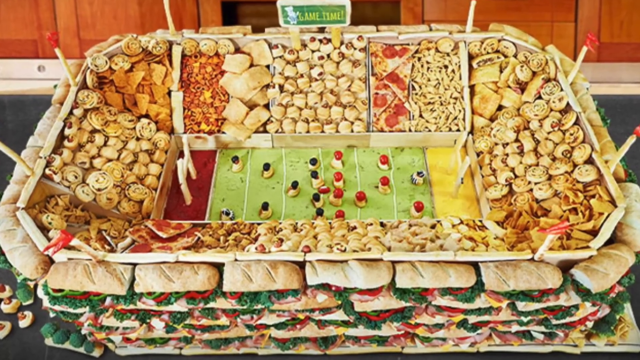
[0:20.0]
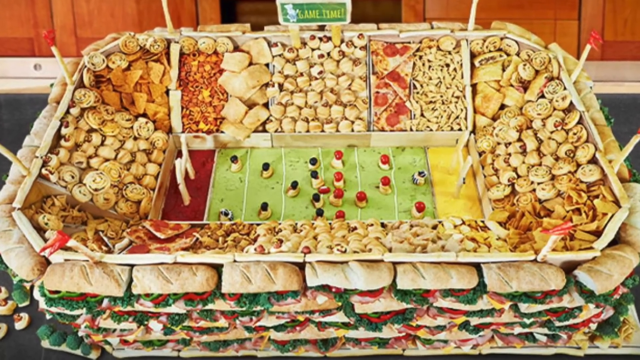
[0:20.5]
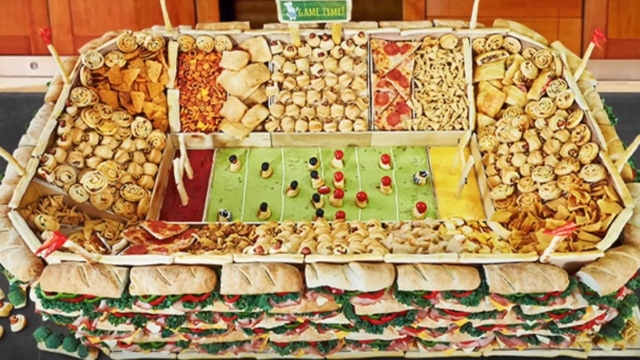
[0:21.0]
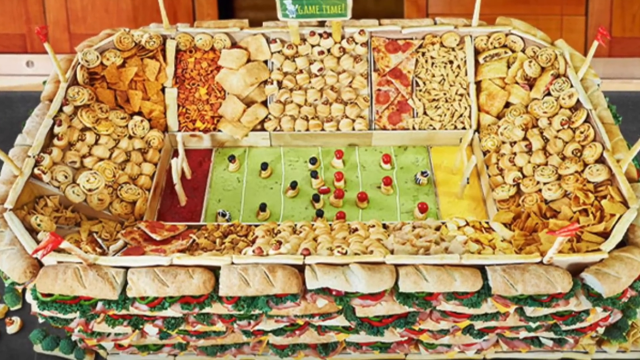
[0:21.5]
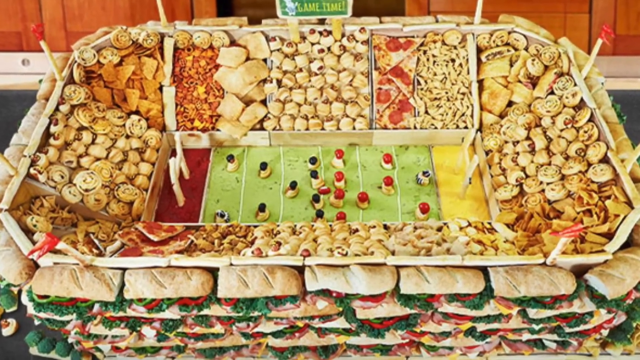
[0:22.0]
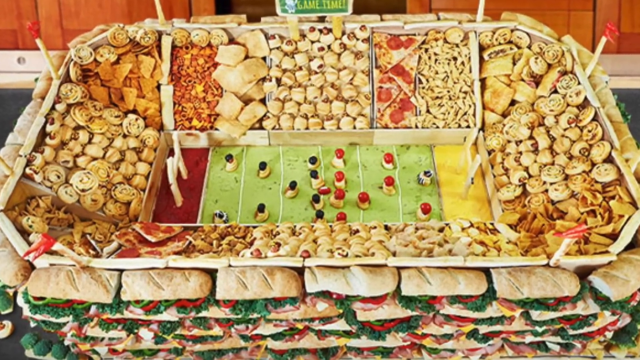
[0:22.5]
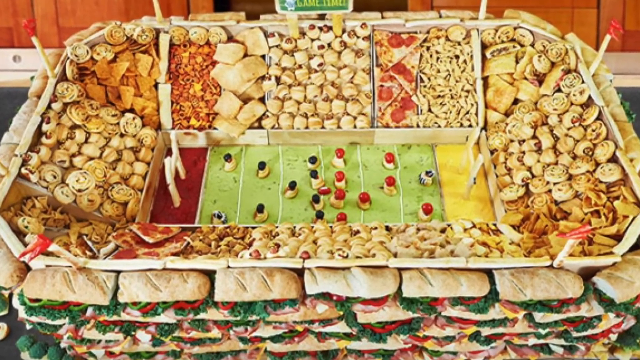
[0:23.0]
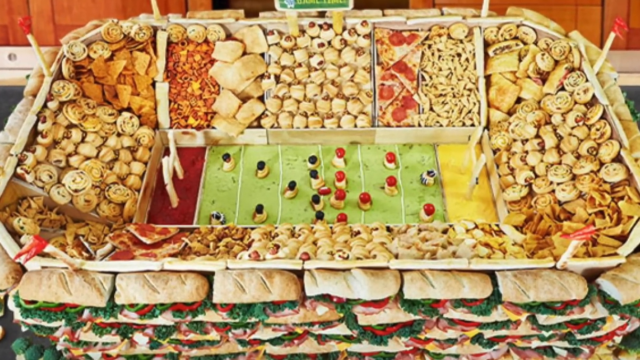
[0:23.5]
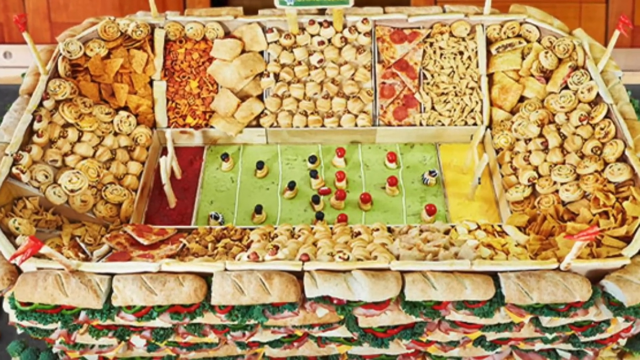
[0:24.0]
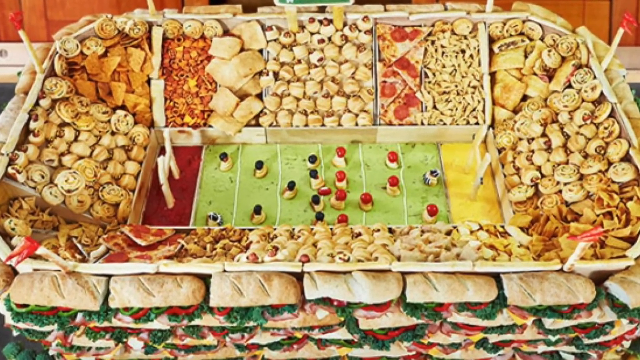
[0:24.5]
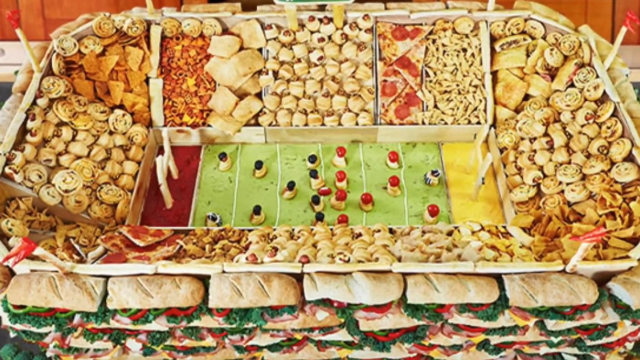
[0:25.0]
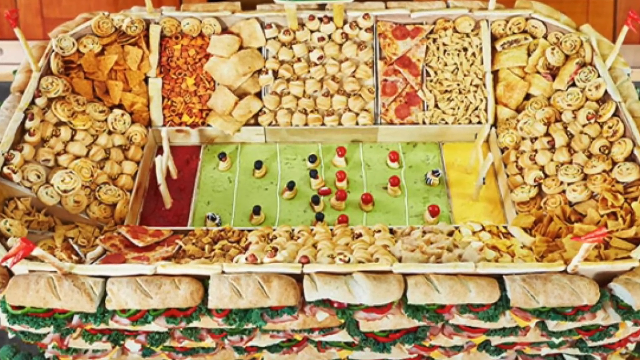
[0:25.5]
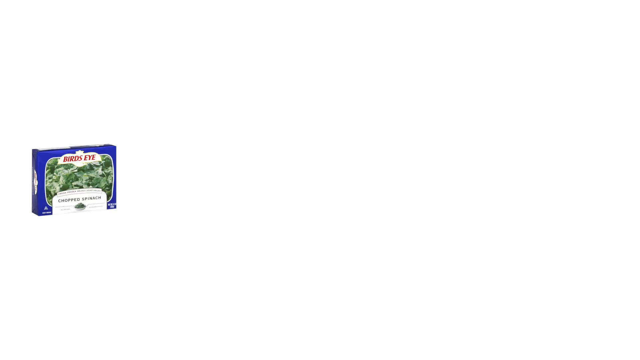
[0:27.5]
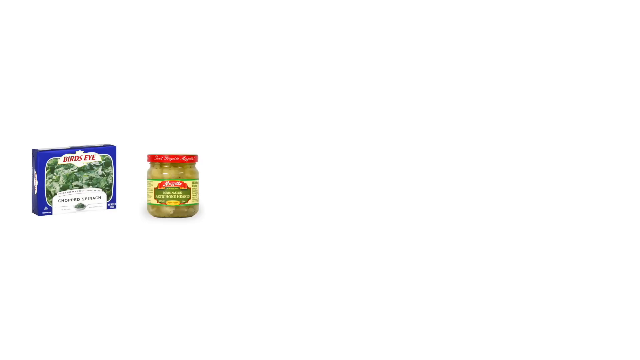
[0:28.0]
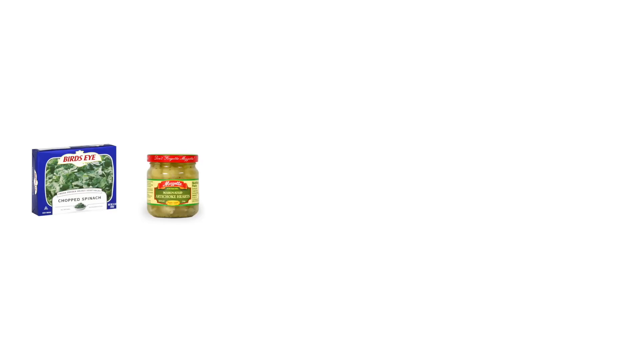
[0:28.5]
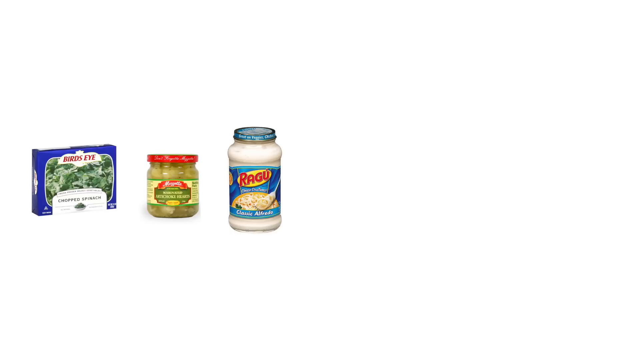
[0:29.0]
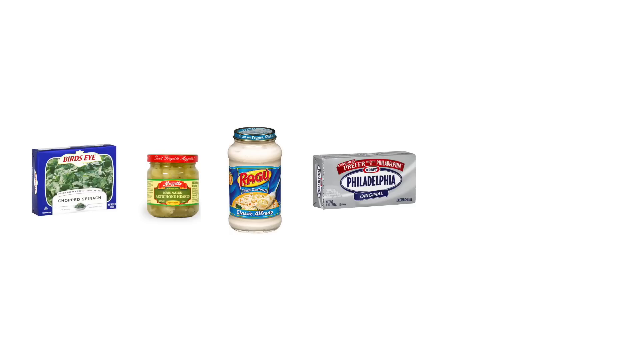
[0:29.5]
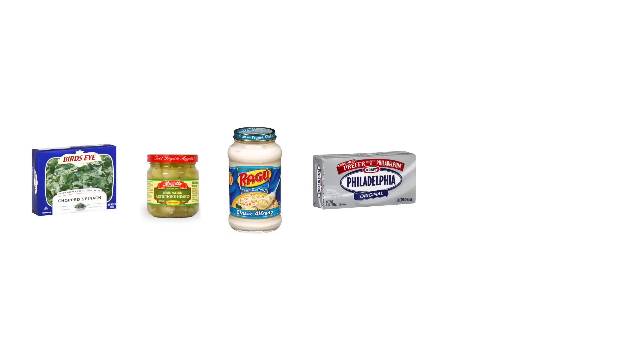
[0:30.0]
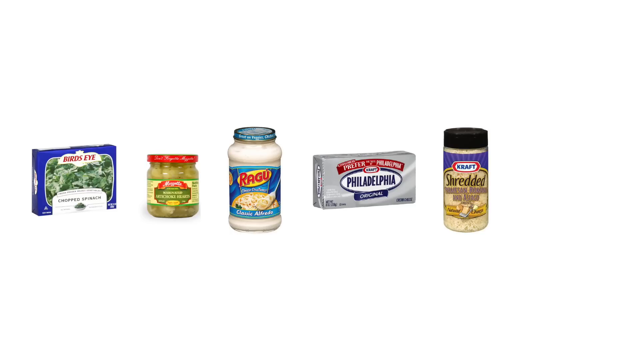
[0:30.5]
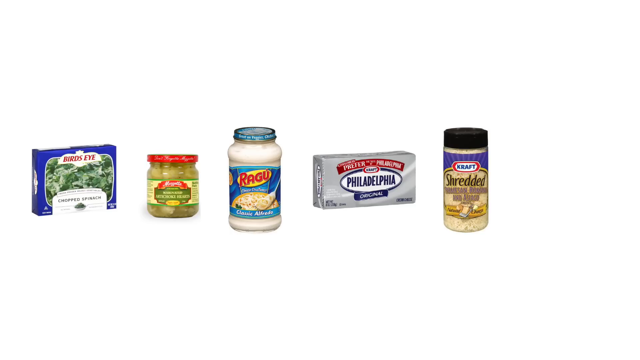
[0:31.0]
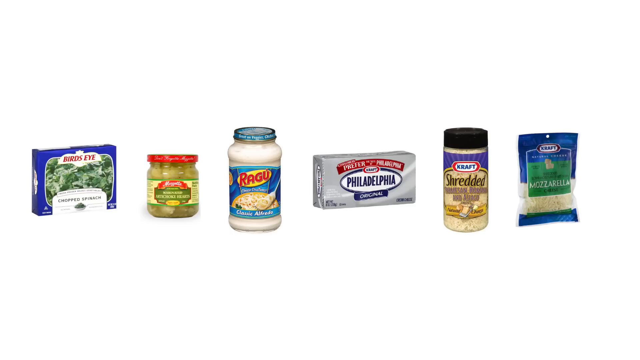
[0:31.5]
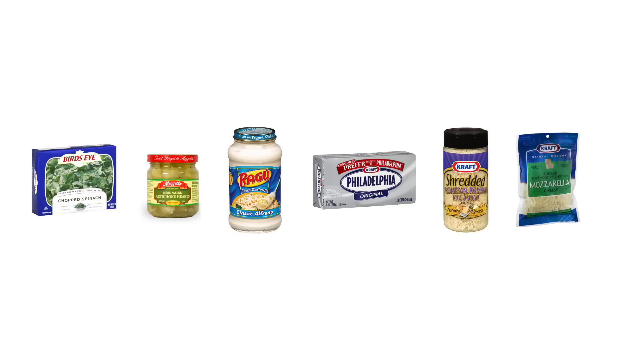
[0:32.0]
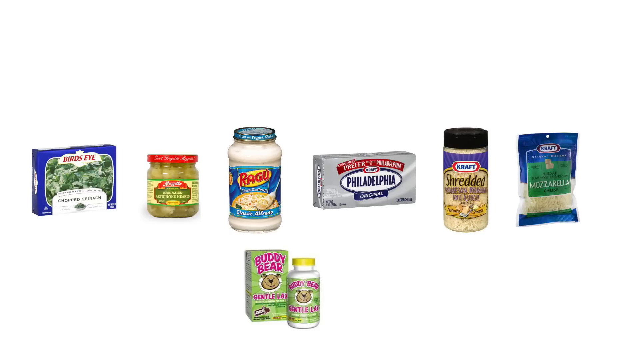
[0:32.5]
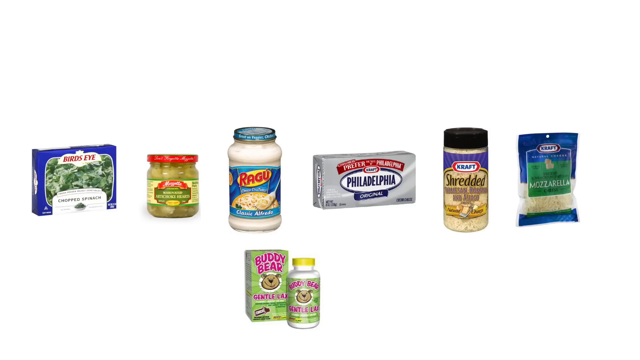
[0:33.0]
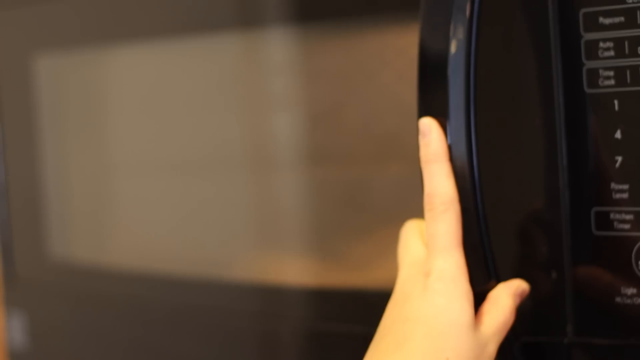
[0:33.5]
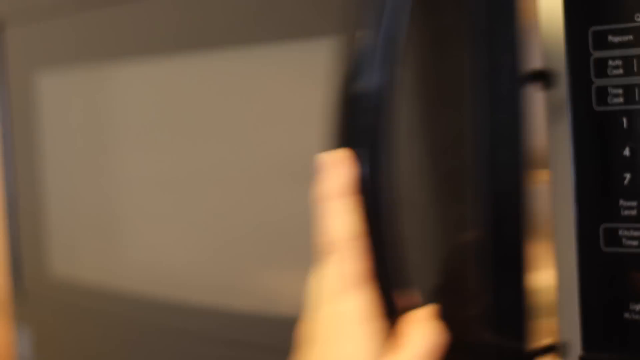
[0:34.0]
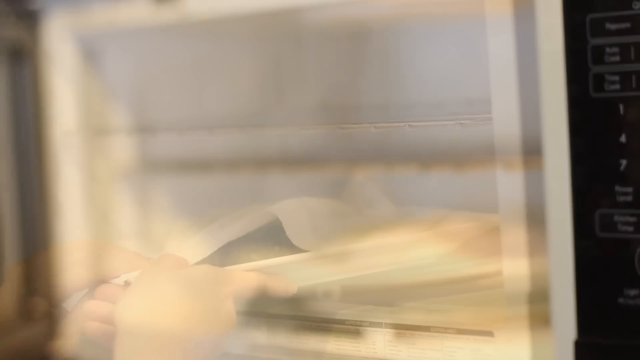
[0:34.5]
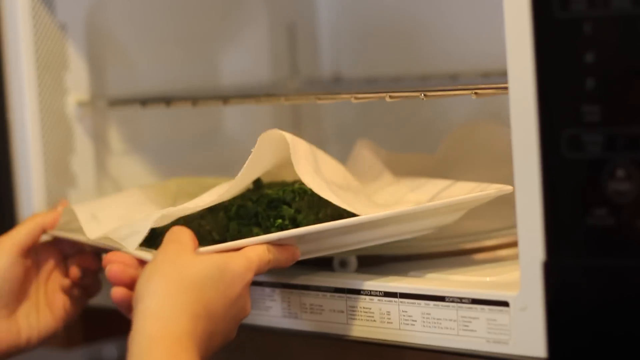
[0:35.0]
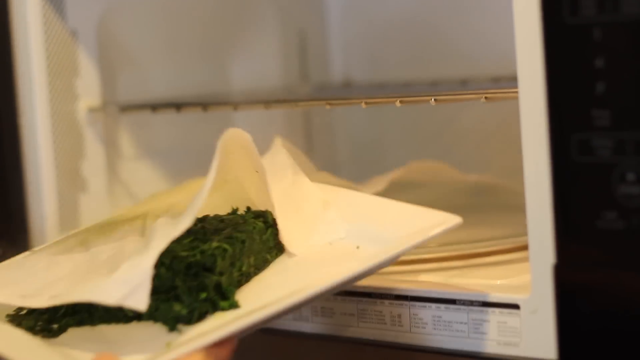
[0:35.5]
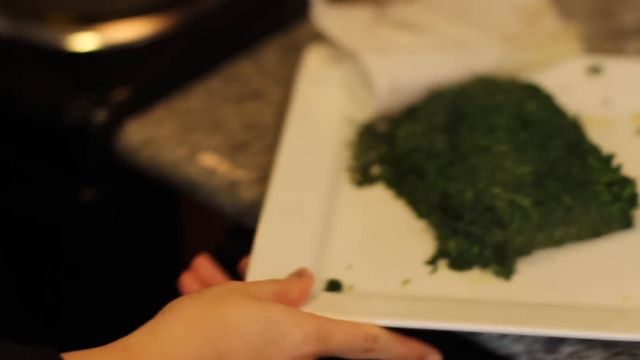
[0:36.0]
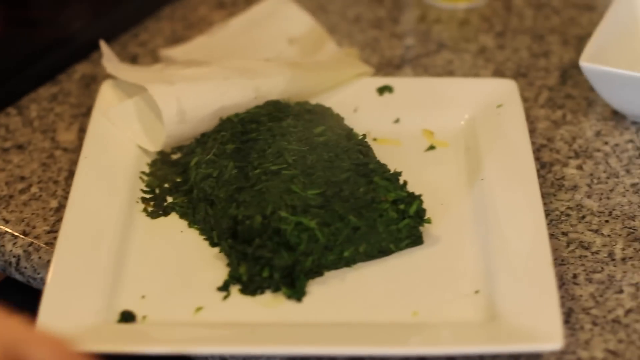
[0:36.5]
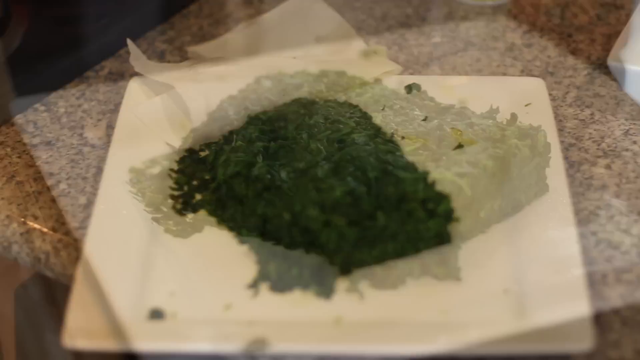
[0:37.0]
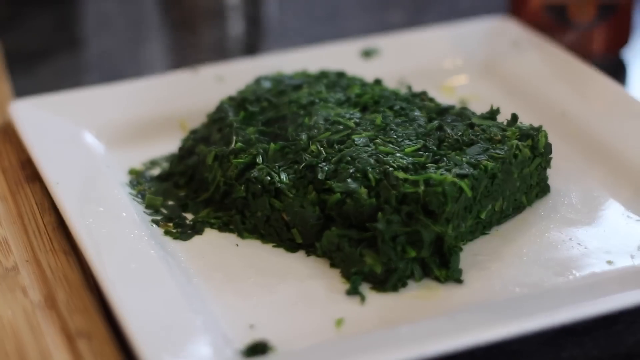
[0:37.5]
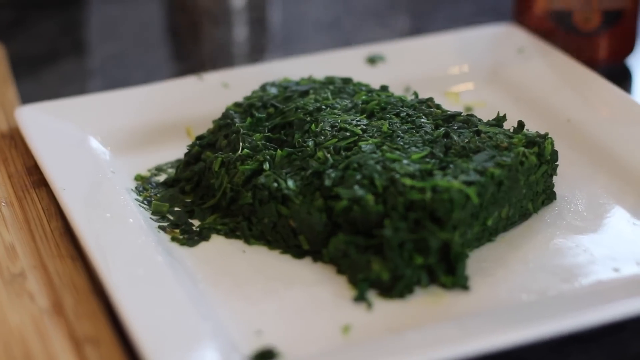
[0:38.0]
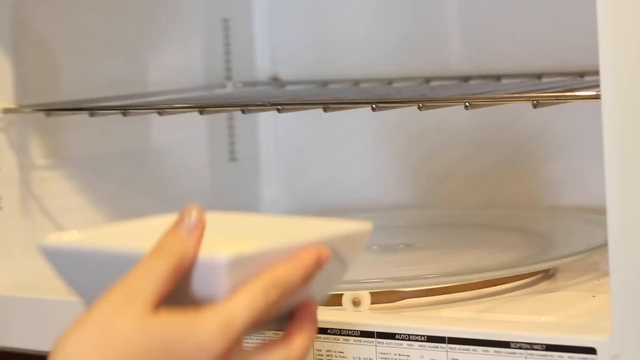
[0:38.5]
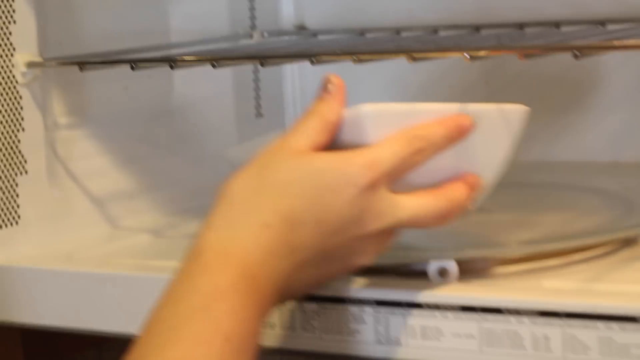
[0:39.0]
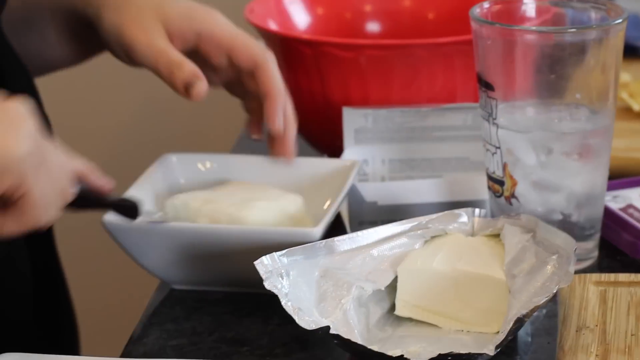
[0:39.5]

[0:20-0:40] Different branded products are shown: Bird's Eye chopped spinach, a jar of marinated artichoke hearts, Ragu Classic Alfredo, Philadelphia Original, what looks to be butter, some kind of shredded cheese, and mozzarella cheese. These seem to be the ingredients for the artichoke dip. The little cartoon pig, which seems to be the channel's logo, appears as well. A white hand opens a microwave, and there is a square white bowl inside holding what is apparently spinach. The spinach is taken out and carefully placed. Then butter is put into white bowls. The setting is a kitchen and it all looks professionally done; the person is white.